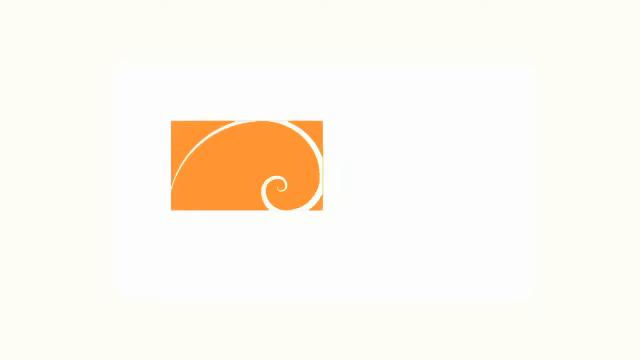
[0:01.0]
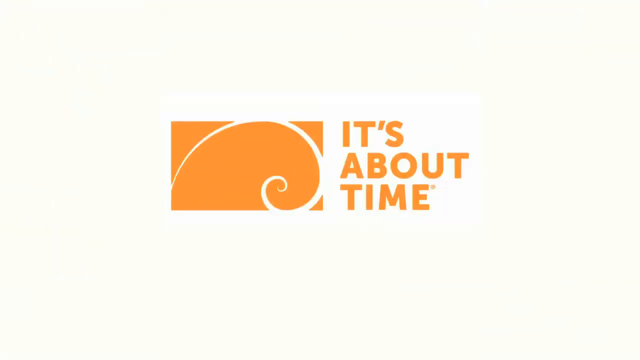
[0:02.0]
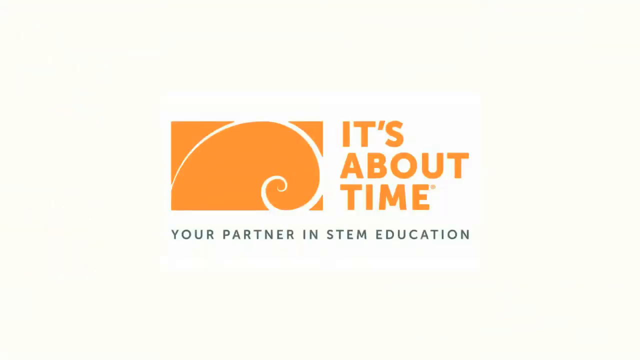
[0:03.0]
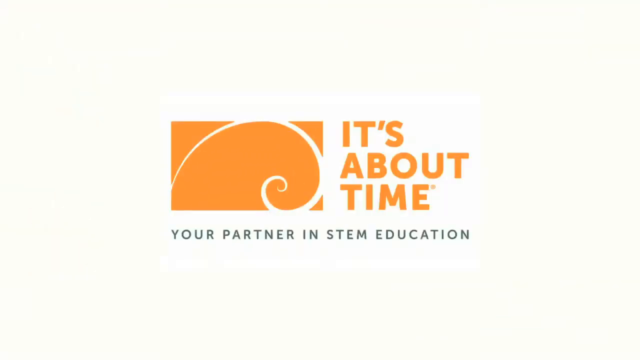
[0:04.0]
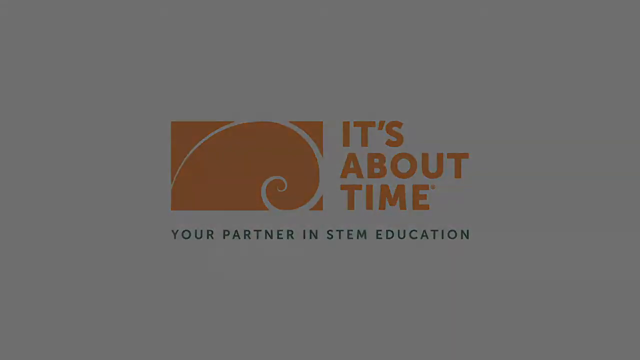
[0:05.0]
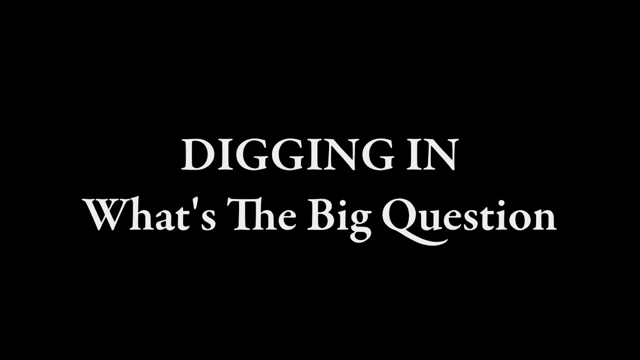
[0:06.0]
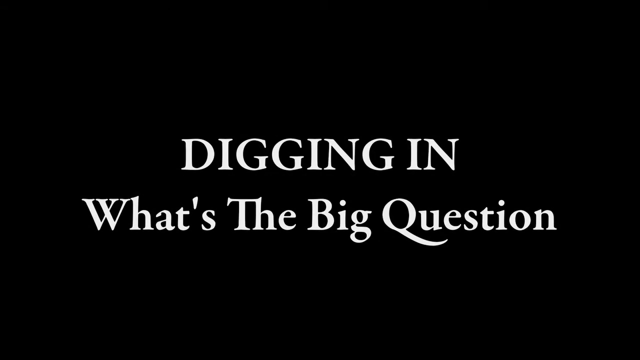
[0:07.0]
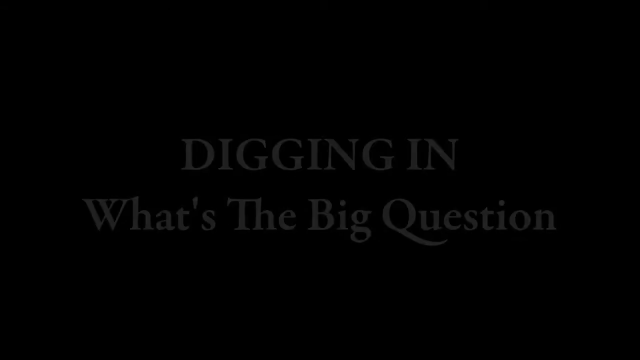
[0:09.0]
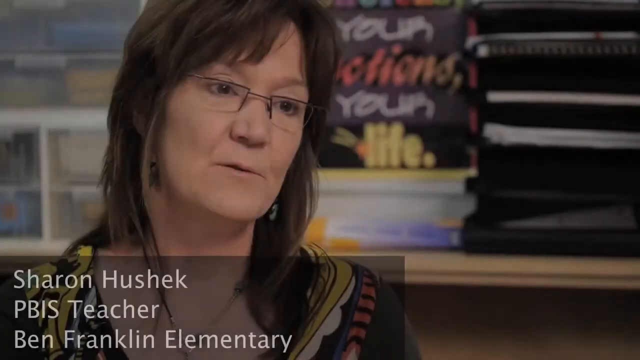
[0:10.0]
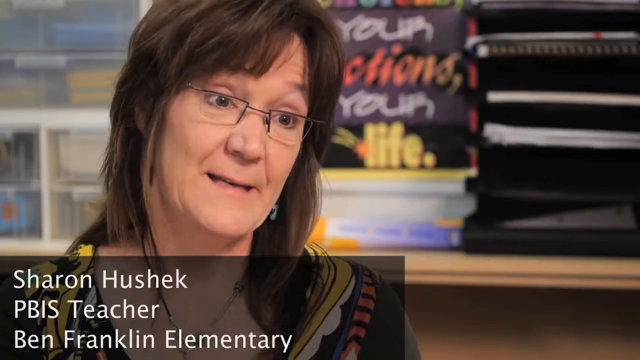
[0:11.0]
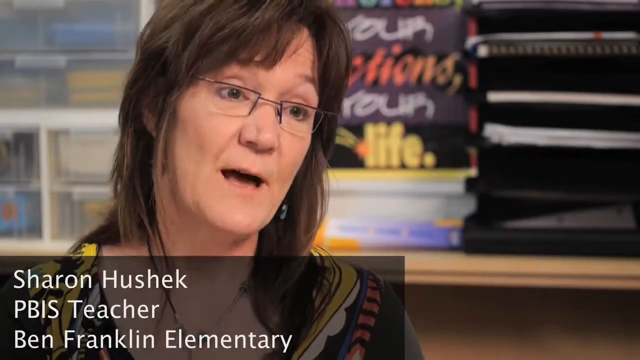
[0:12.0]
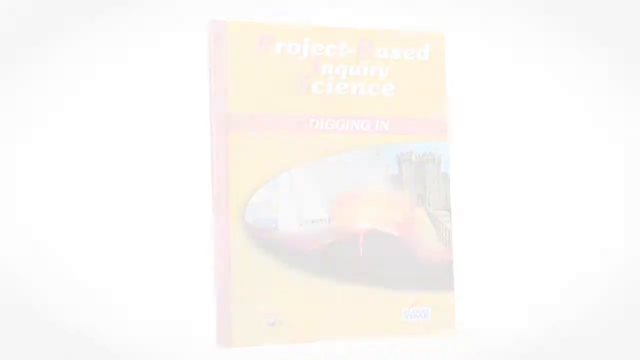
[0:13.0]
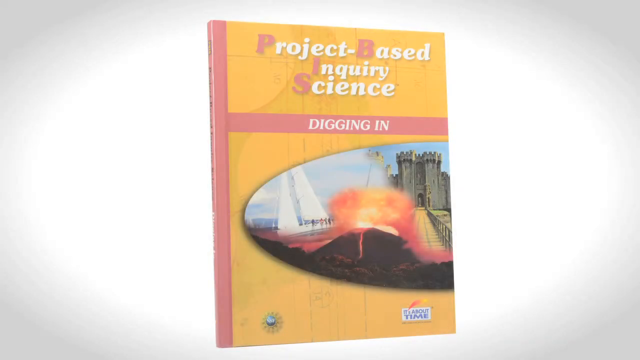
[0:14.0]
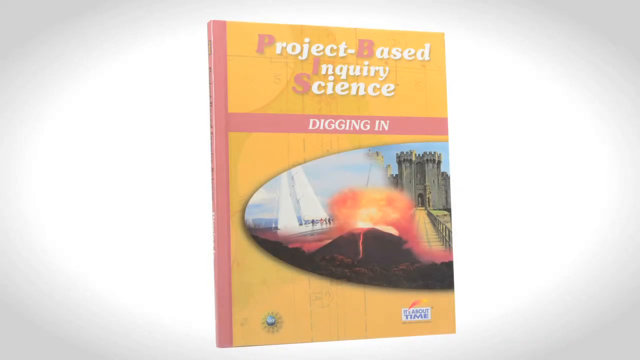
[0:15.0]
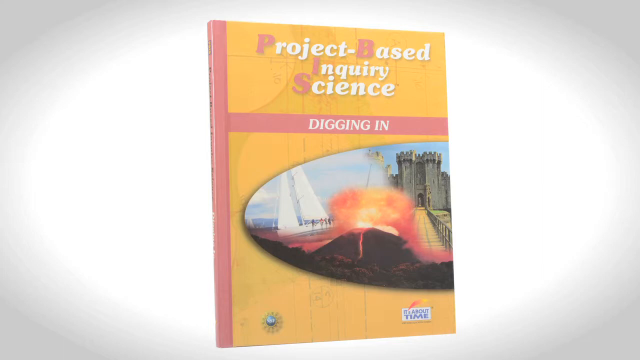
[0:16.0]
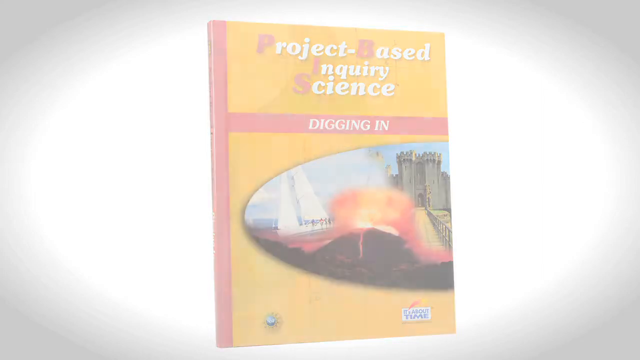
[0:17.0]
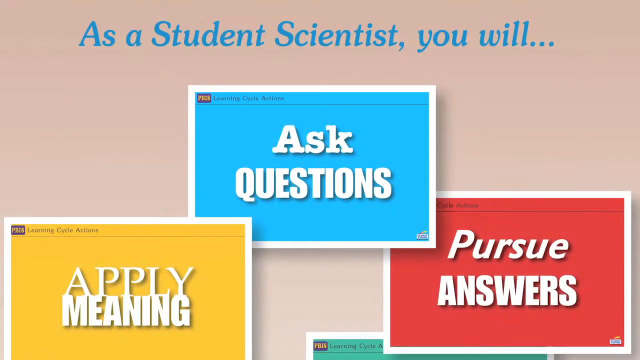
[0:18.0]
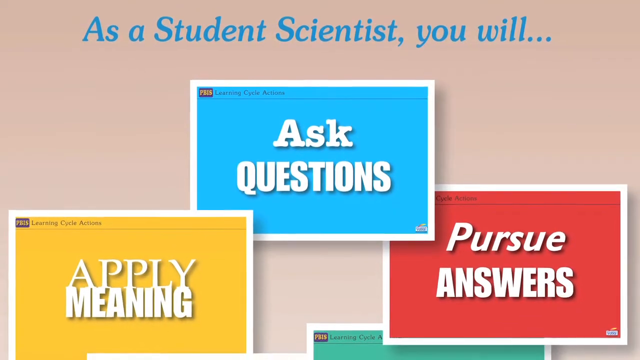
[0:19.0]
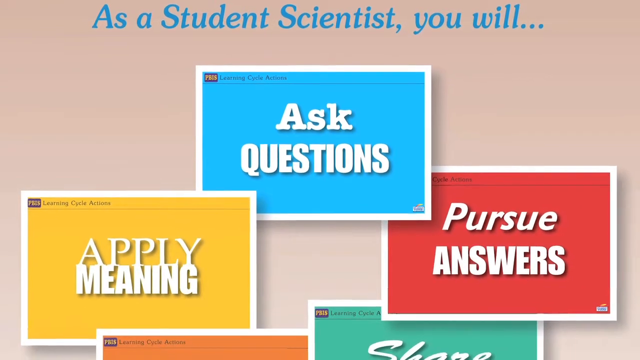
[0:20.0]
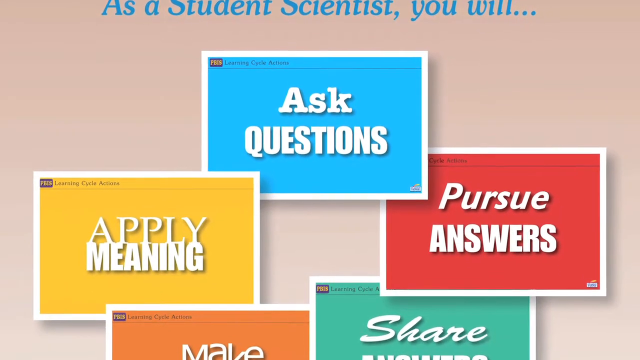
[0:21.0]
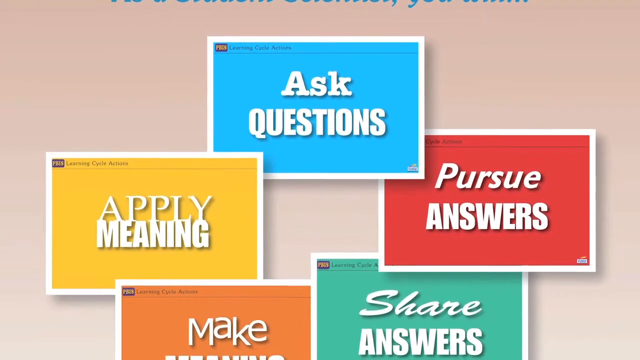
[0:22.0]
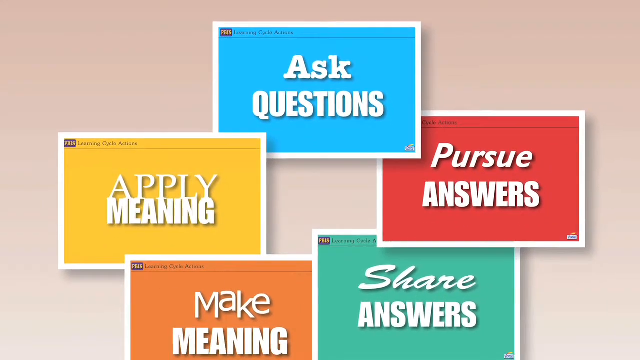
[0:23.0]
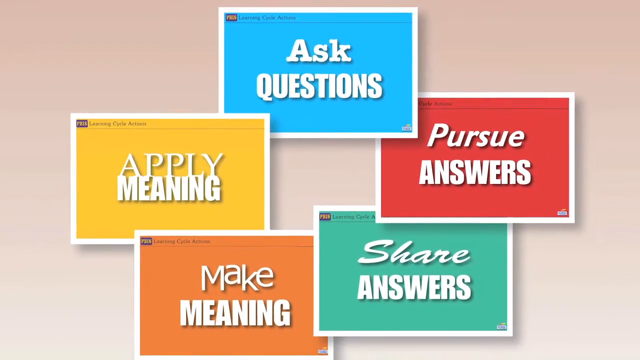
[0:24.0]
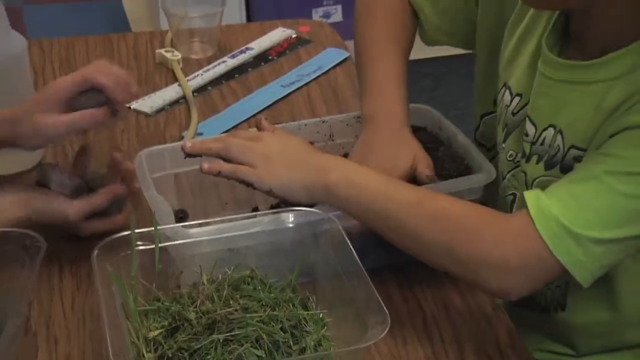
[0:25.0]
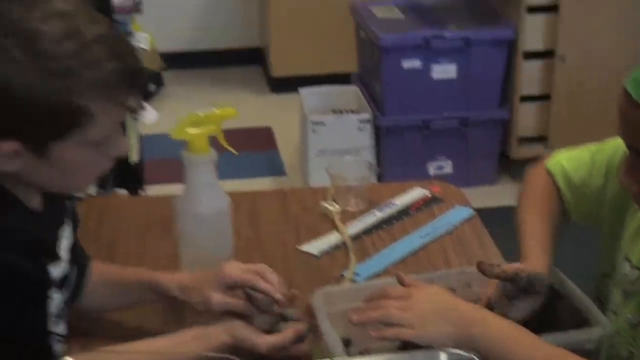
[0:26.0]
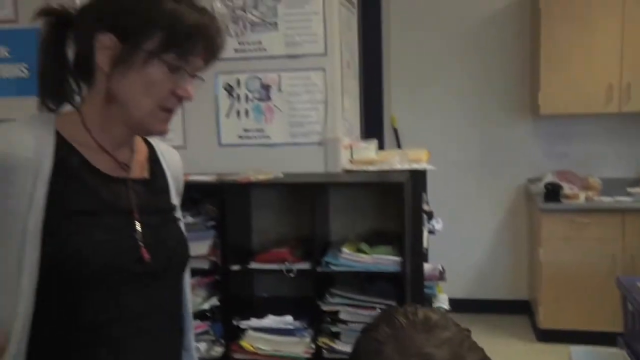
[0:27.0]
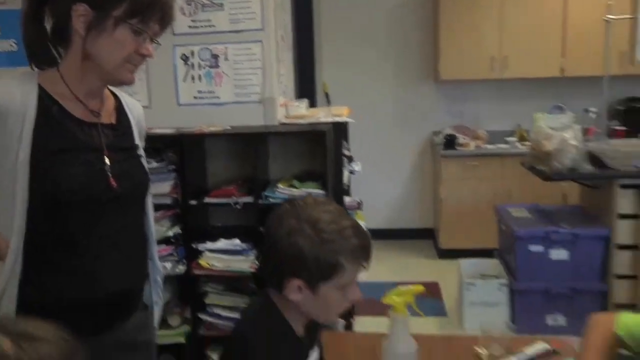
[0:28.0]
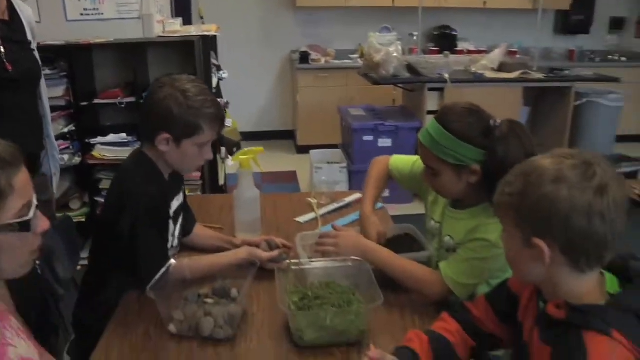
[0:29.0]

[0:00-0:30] In a classroom, students handle a practical with different things on a table workbench. Two girls and two boys do the practical together and discuss it among themselves. One student wears a green T-shirt, and another wears a black T-shirt and has black hair. The teacher stands behind the children, keenly following what they do, and the students listen keenly and ask questions. On the table there are a green pen and a water bottle. There is a bucket, and behind it is a desk with books on it.